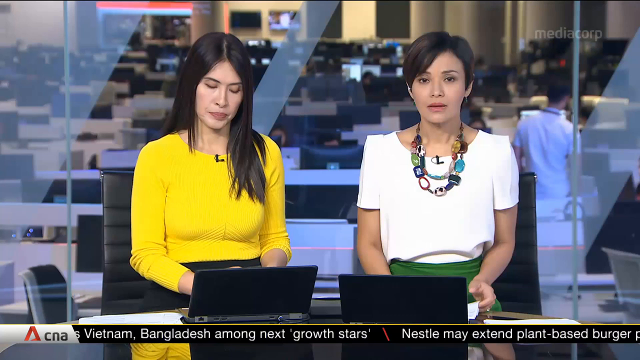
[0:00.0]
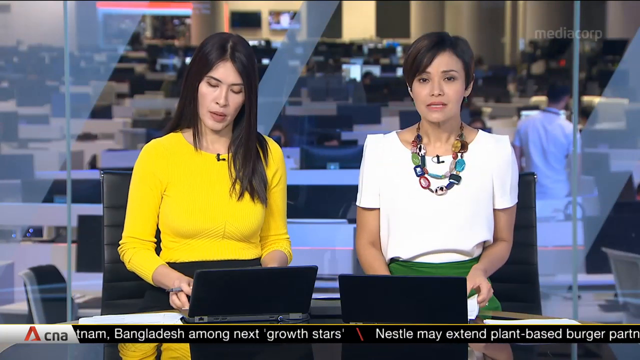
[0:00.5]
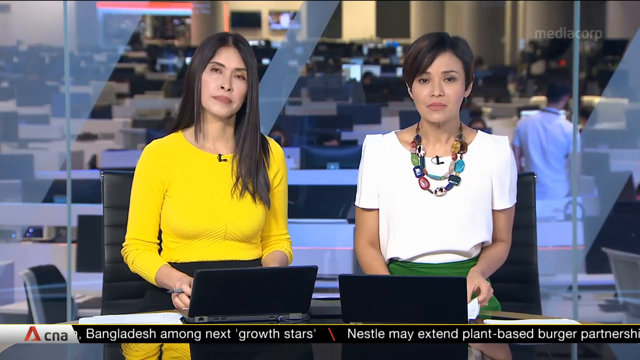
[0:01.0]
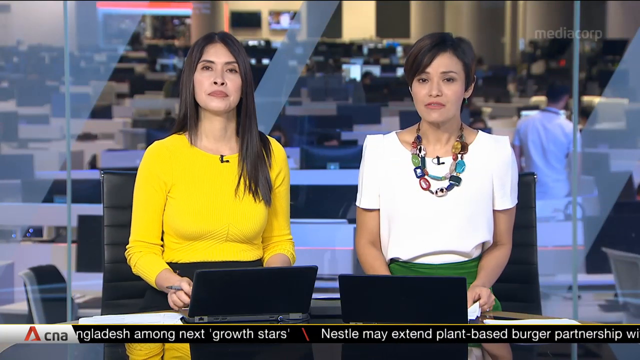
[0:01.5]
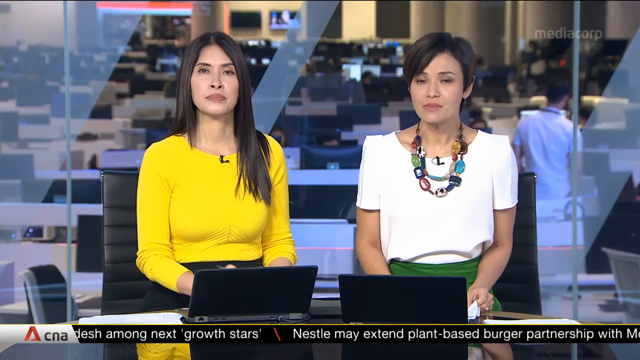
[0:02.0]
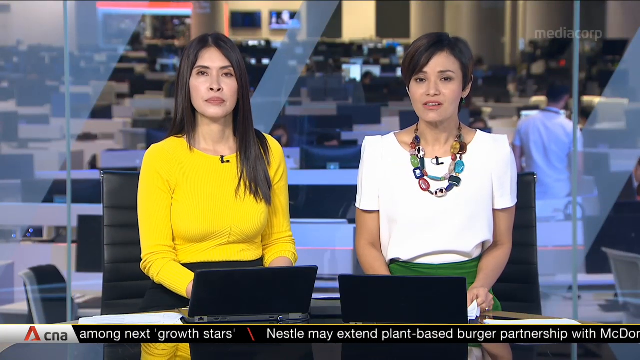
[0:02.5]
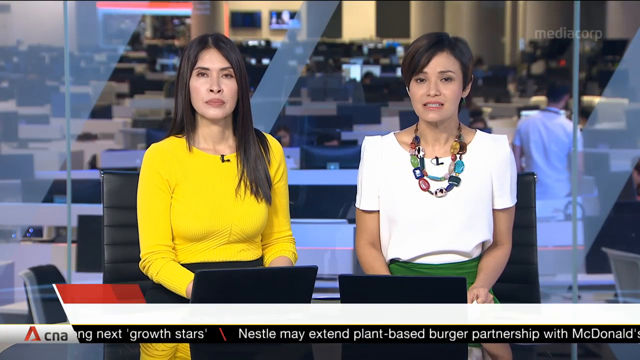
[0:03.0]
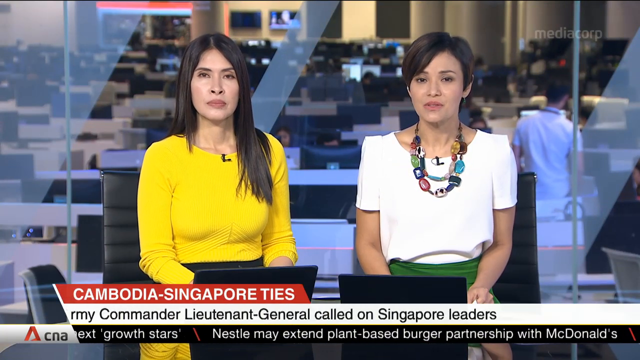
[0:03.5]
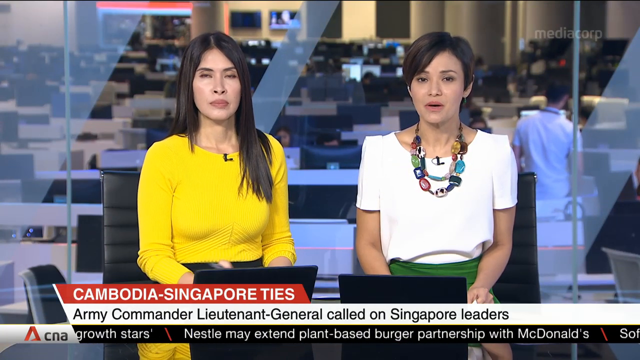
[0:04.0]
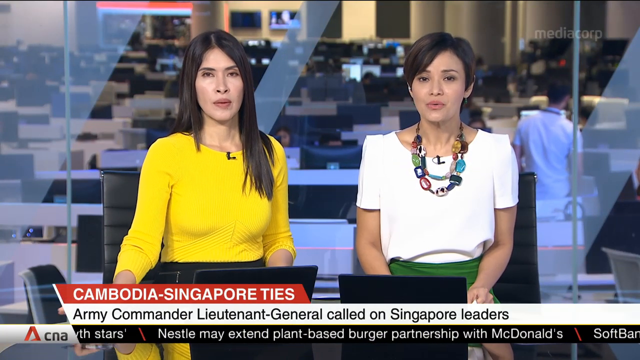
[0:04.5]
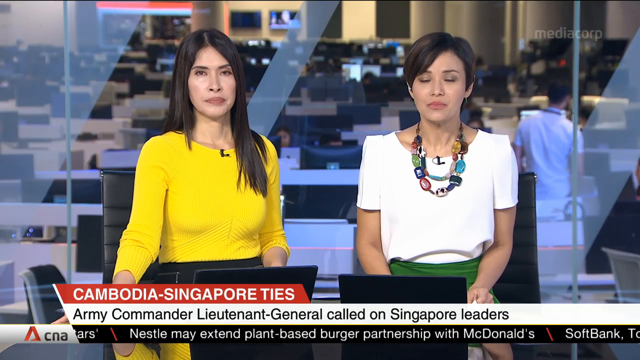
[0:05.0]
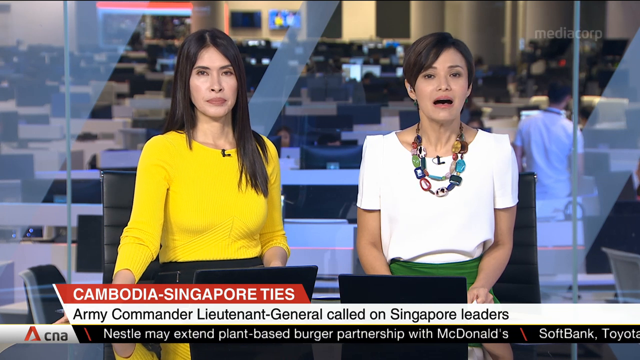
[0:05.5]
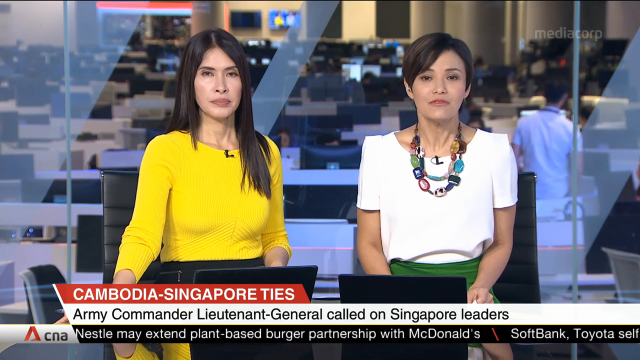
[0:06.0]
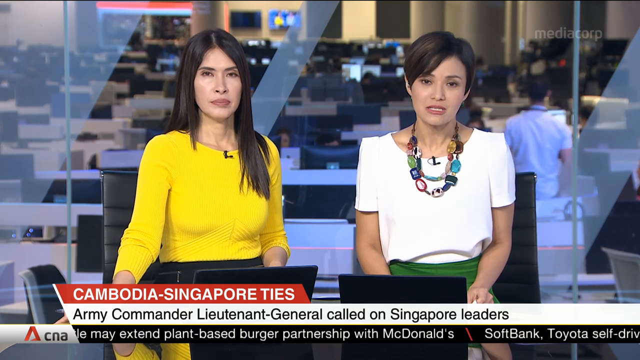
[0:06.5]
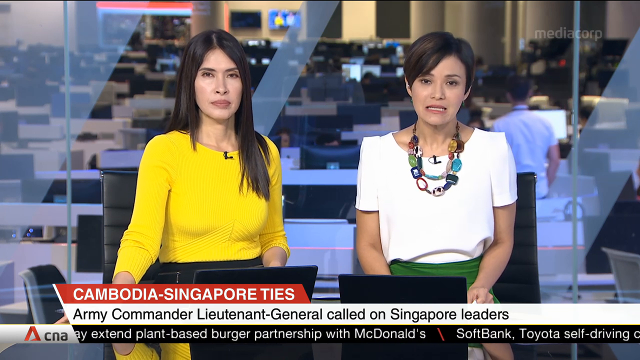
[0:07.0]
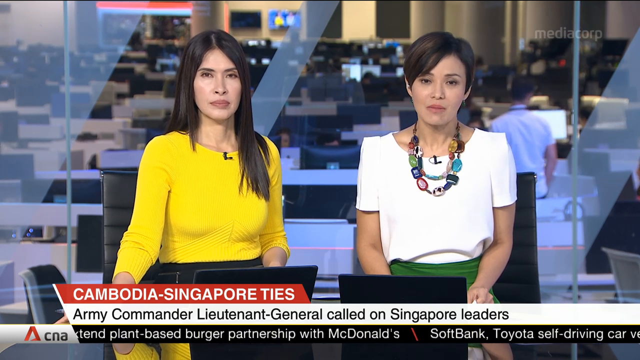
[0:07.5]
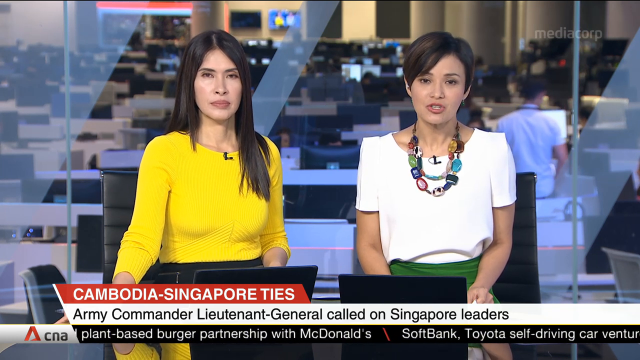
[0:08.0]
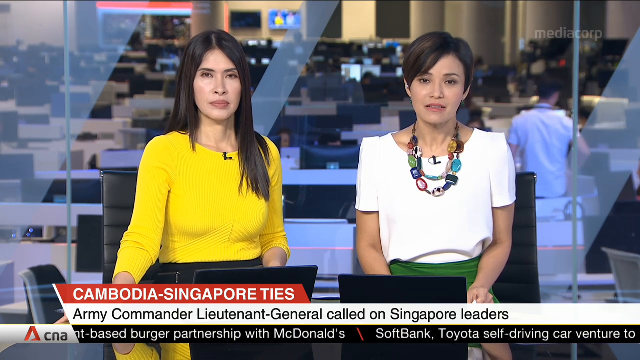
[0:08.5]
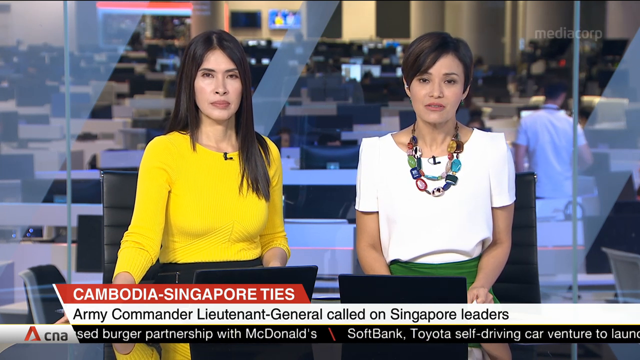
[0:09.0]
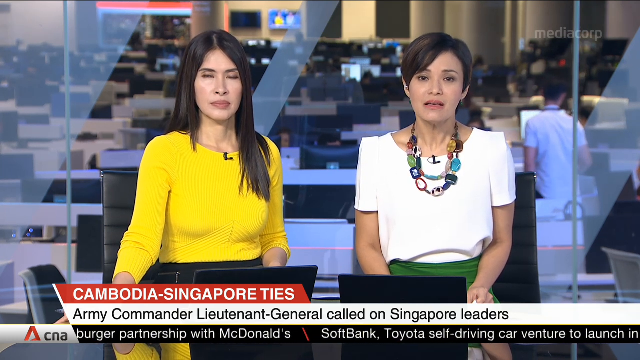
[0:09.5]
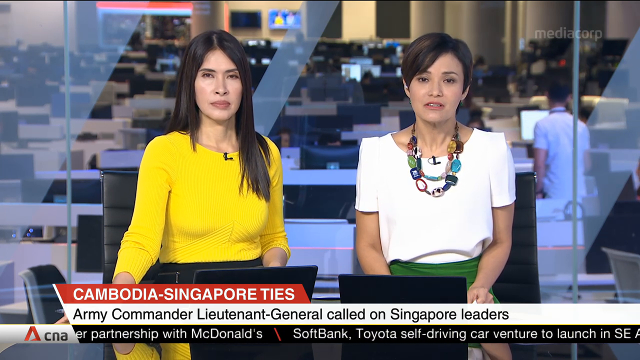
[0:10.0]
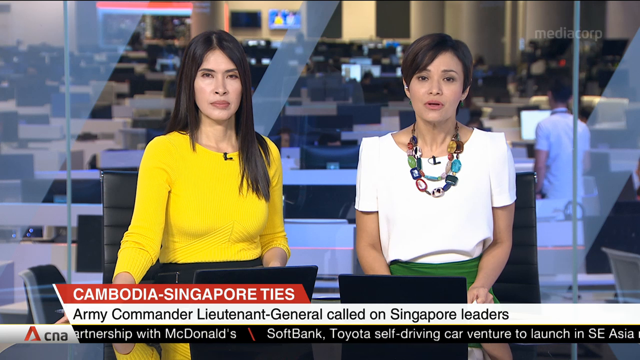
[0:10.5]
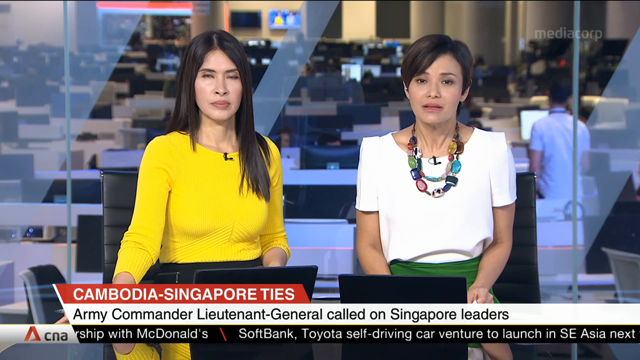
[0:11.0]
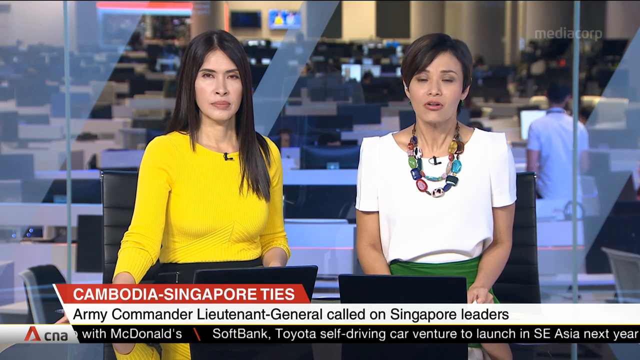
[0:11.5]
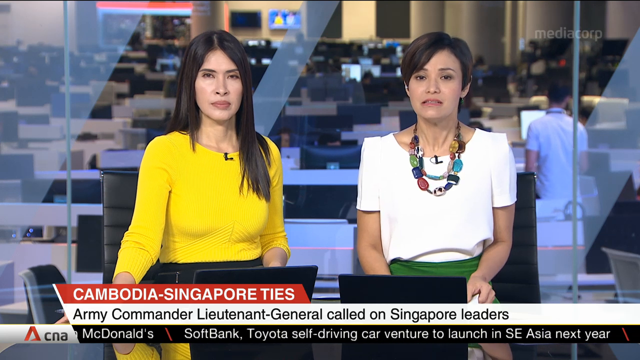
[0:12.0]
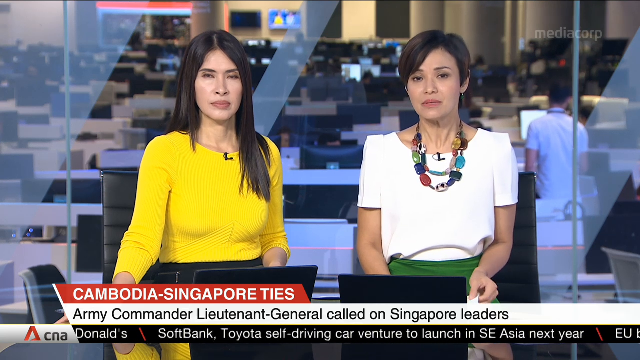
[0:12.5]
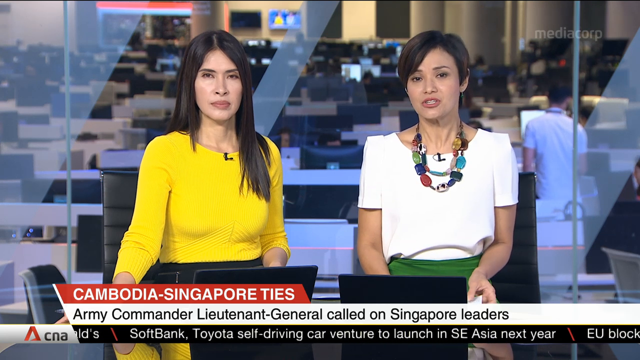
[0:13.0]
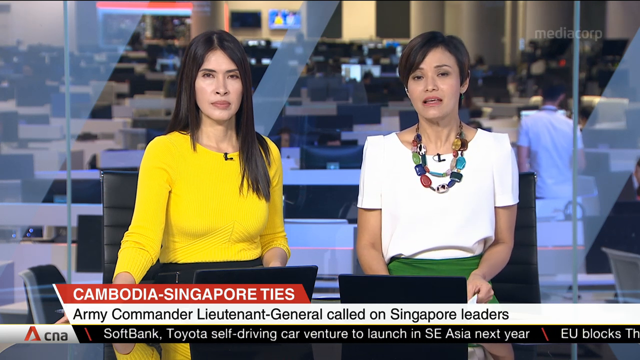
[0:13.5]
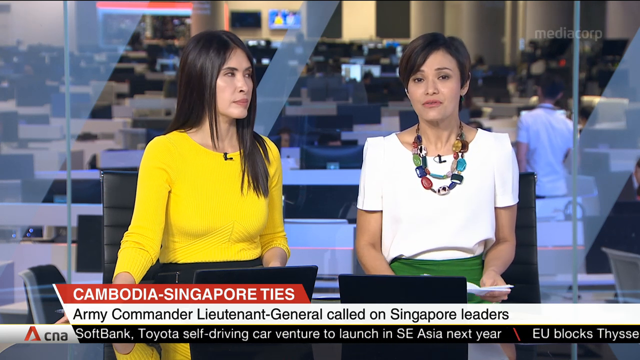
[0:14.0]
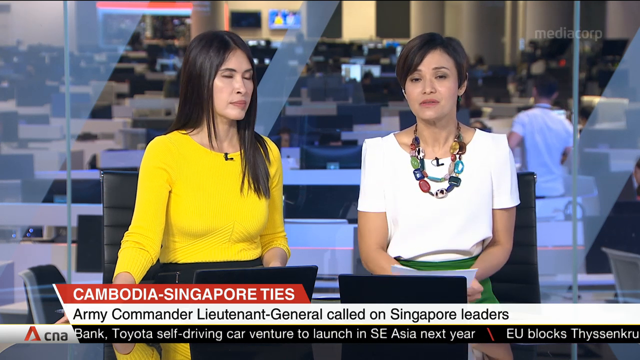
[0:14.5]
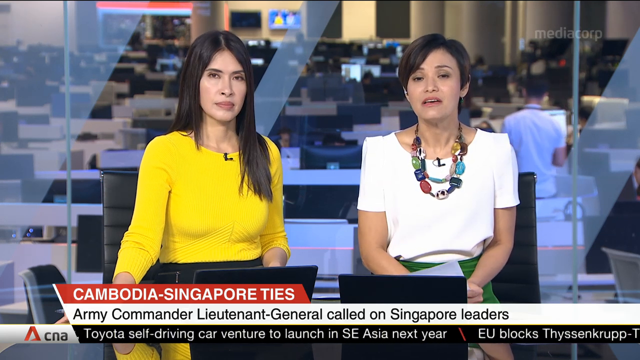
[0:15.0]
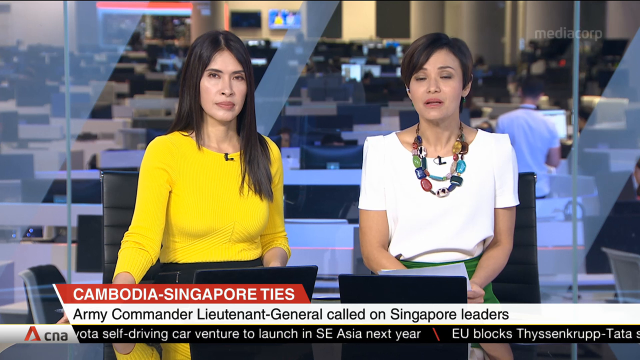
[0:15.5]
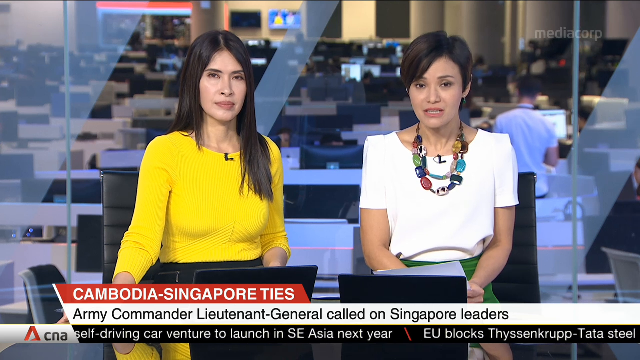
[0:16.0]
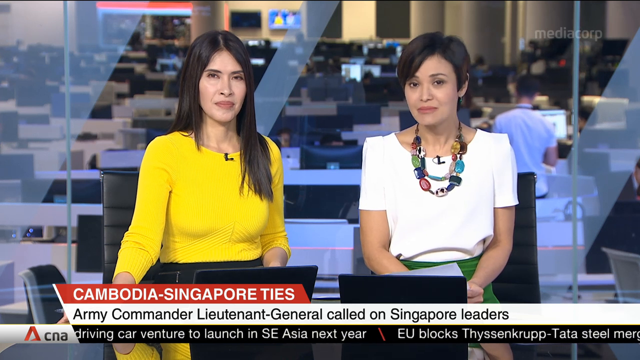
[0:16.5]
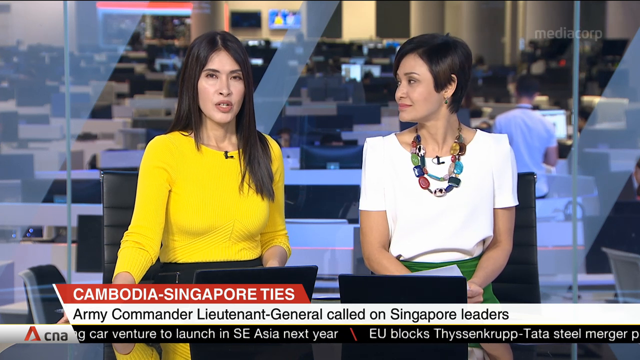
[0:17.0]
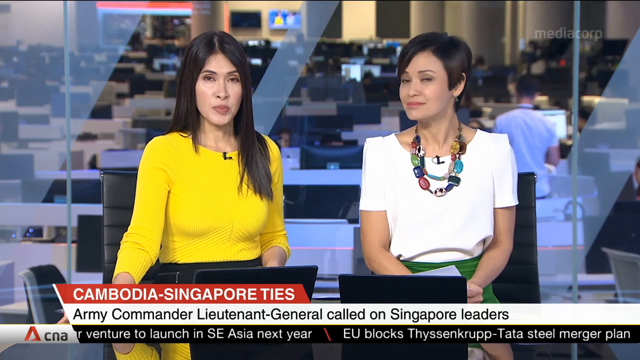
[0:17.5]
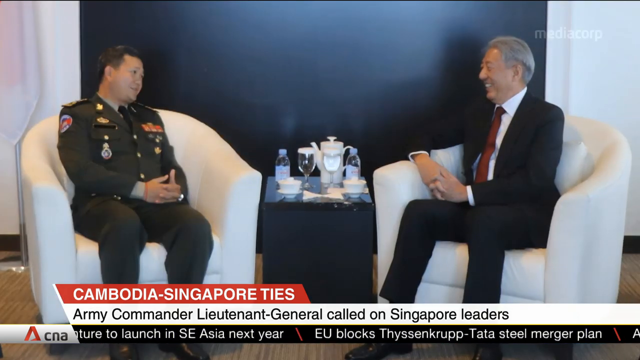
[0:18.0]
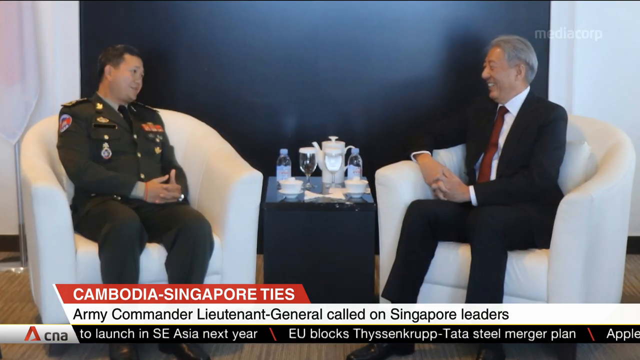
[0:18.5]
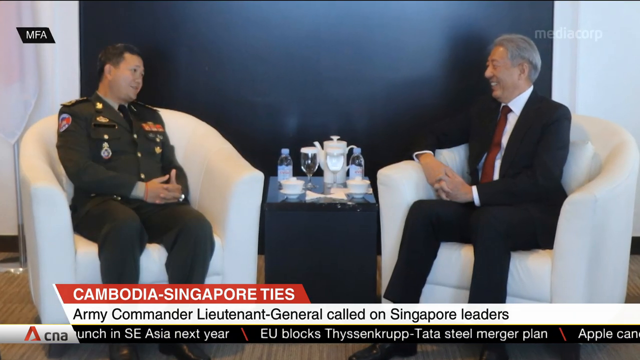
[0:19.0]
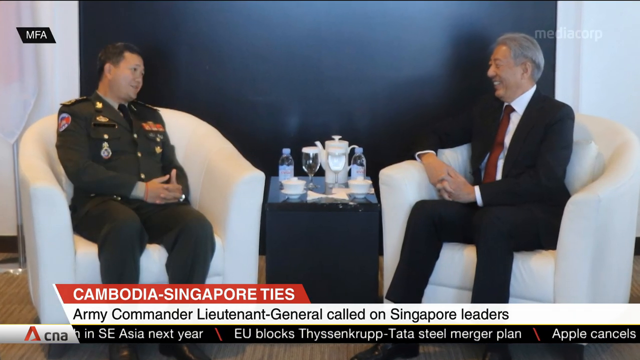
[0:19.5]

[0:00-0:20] Two female news anchors appear on screen. Behind them looks to be an image of a newsroom, which seems static since nothing in the background moves. The woman on the left wears a yellow shirt; her black hair is quite long, past the shoulder, and she appears to be wearing something black on the bottom. The woman on the right has shorter hair and wears a white short-sleeved top, a green bottom, and a bold statement necklace with several colored stones. Two black laptops are in front of the anchors. Just at the end, the anchor on the right looks to the anchor on the left, then looks back to the camera before the scene transitions to two men sitting across from each other in white chairs.